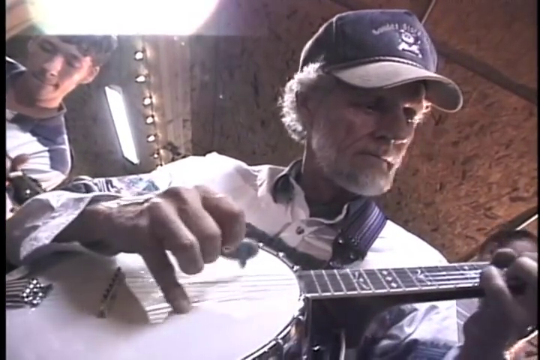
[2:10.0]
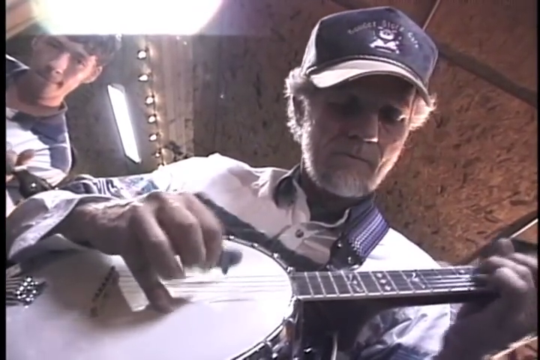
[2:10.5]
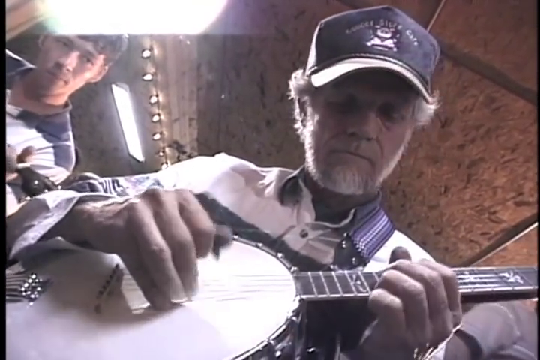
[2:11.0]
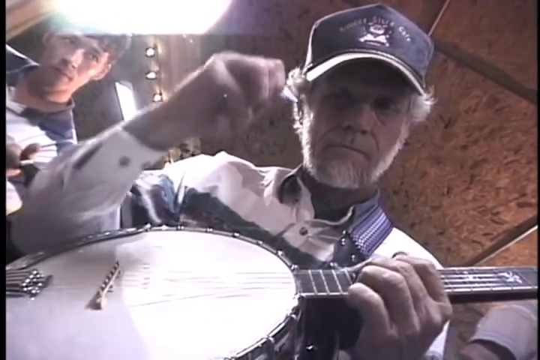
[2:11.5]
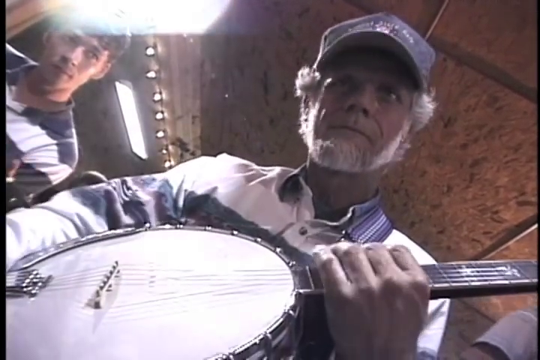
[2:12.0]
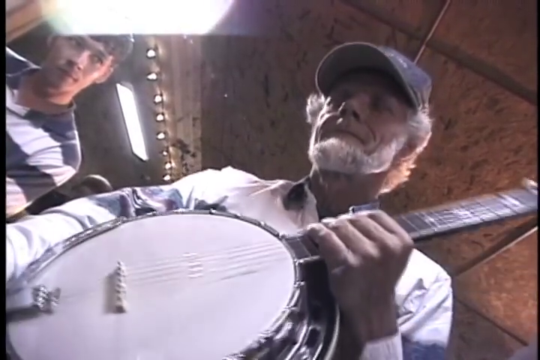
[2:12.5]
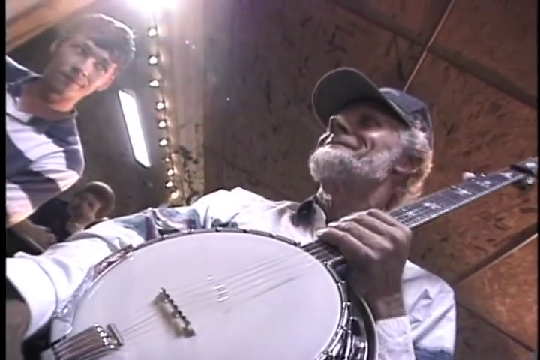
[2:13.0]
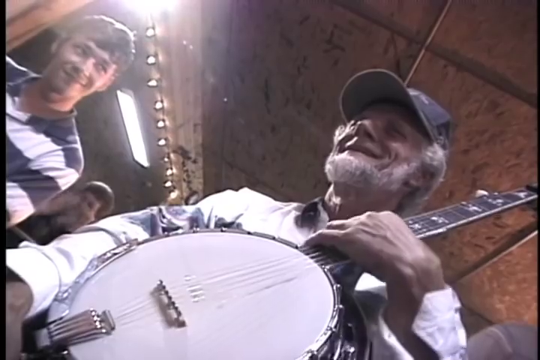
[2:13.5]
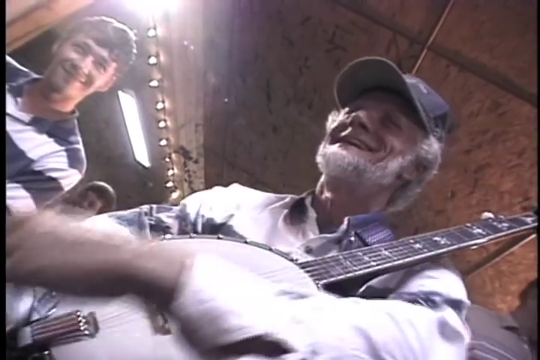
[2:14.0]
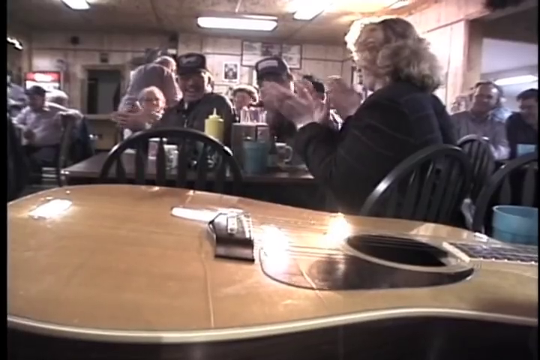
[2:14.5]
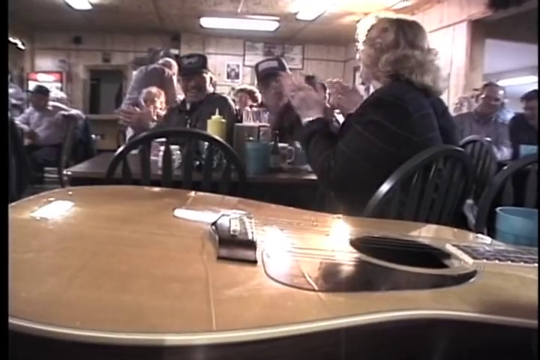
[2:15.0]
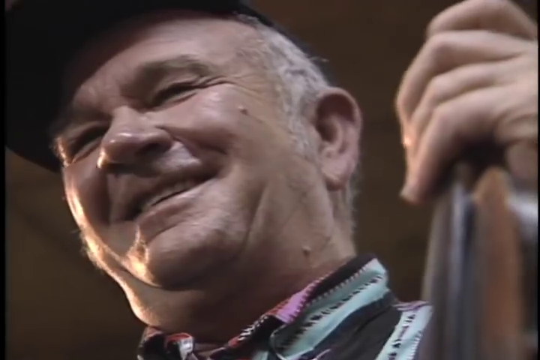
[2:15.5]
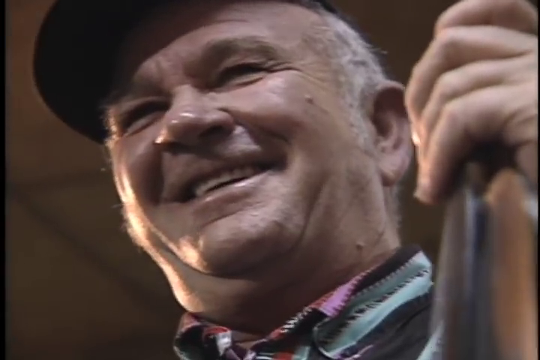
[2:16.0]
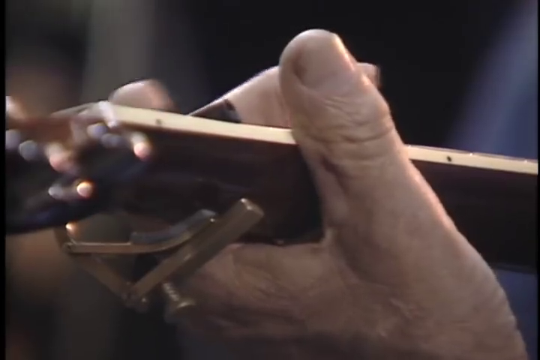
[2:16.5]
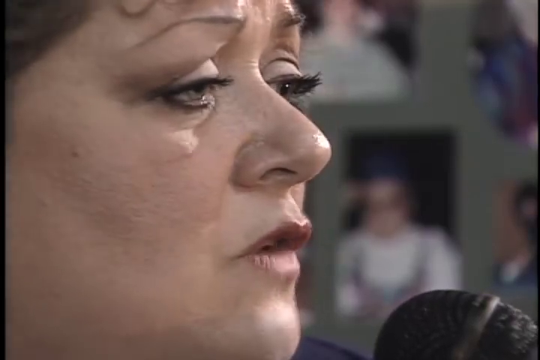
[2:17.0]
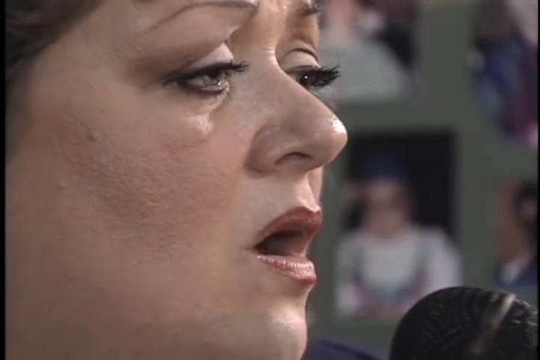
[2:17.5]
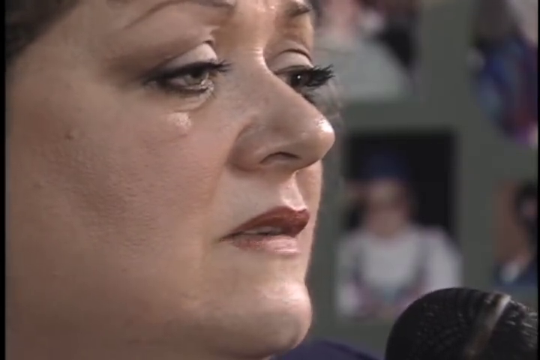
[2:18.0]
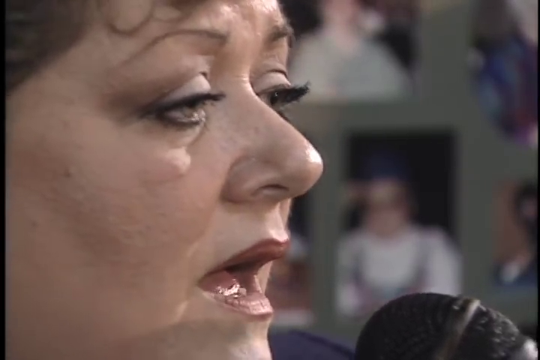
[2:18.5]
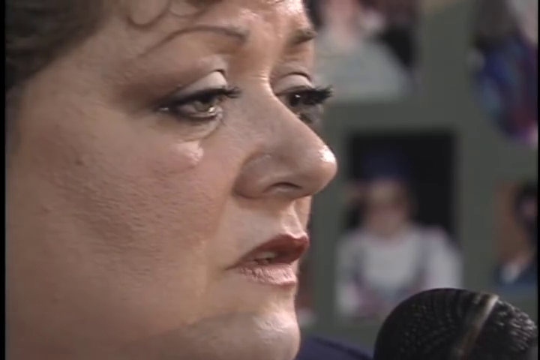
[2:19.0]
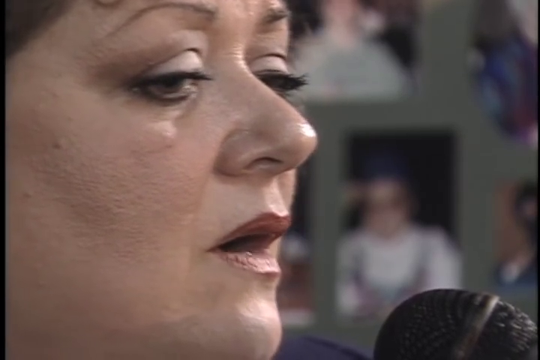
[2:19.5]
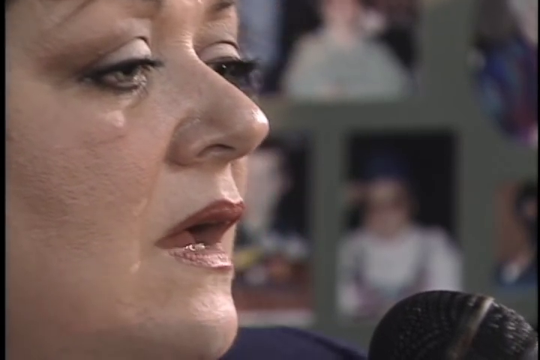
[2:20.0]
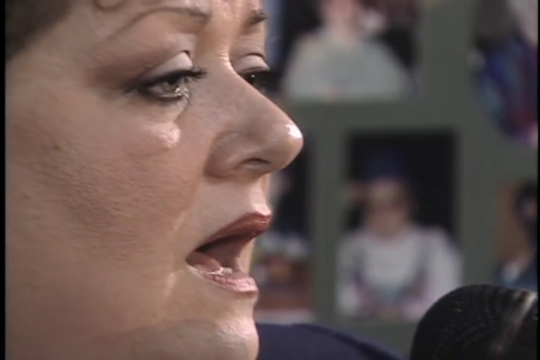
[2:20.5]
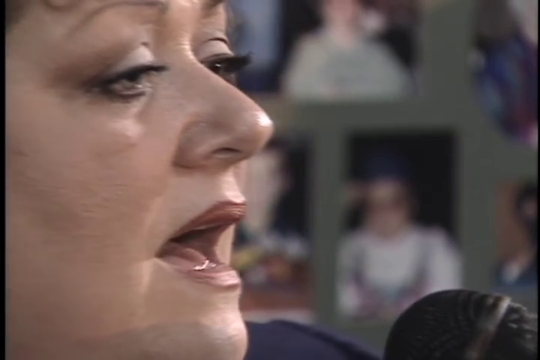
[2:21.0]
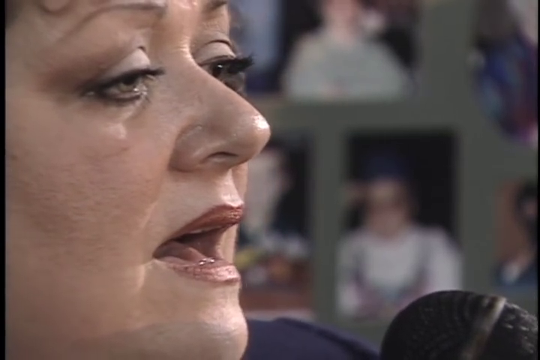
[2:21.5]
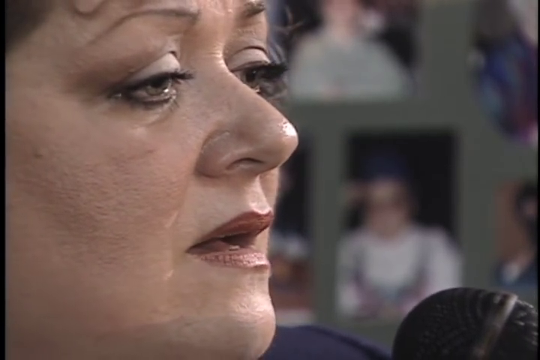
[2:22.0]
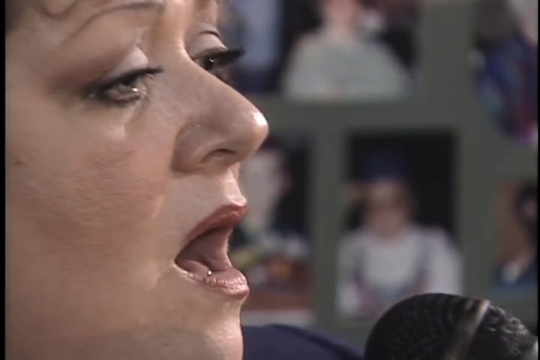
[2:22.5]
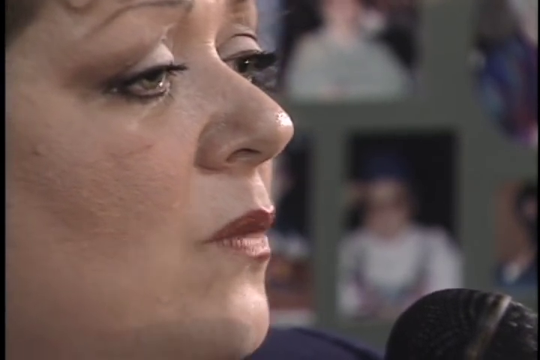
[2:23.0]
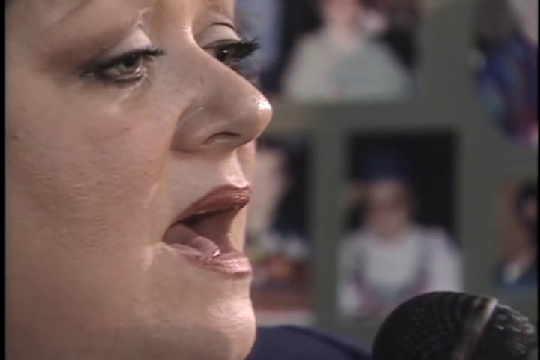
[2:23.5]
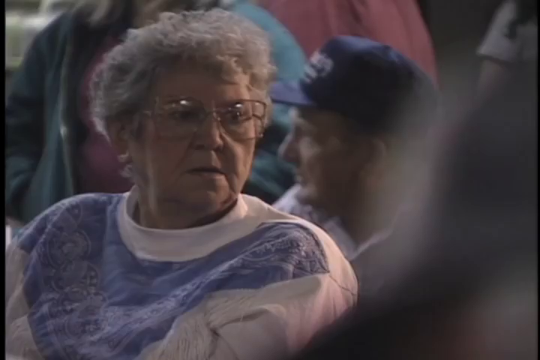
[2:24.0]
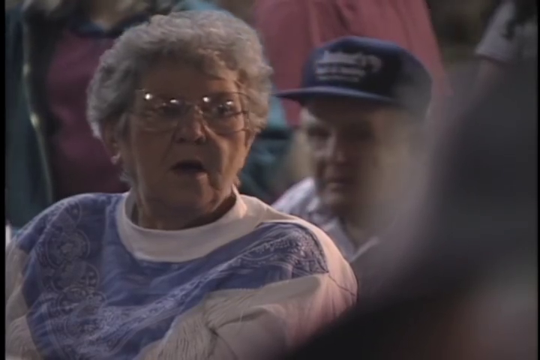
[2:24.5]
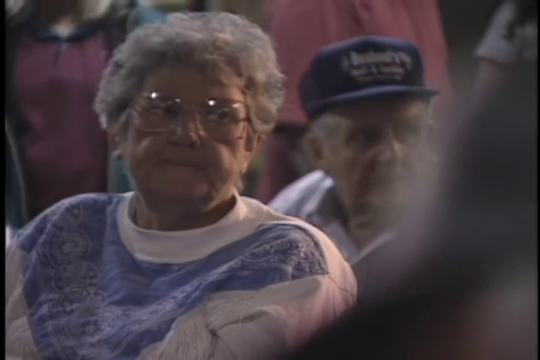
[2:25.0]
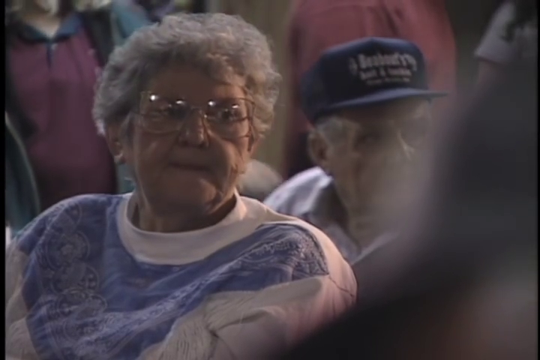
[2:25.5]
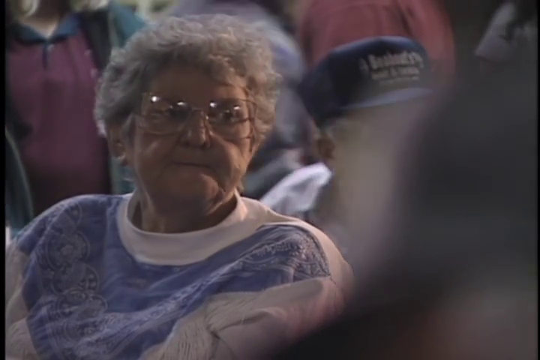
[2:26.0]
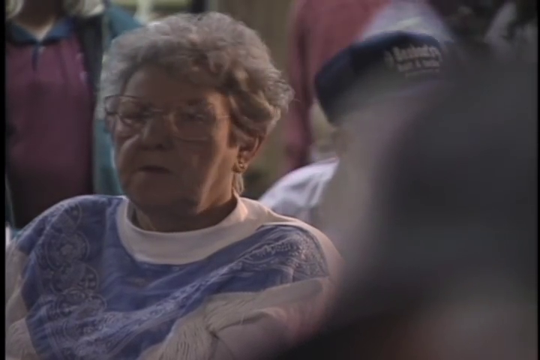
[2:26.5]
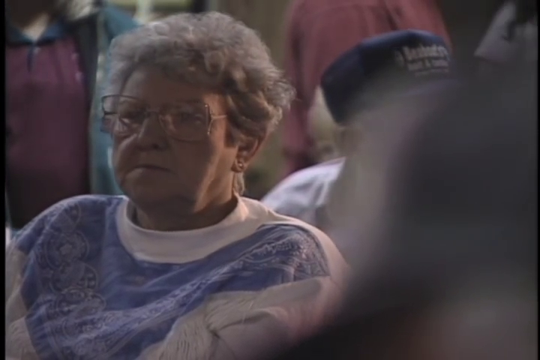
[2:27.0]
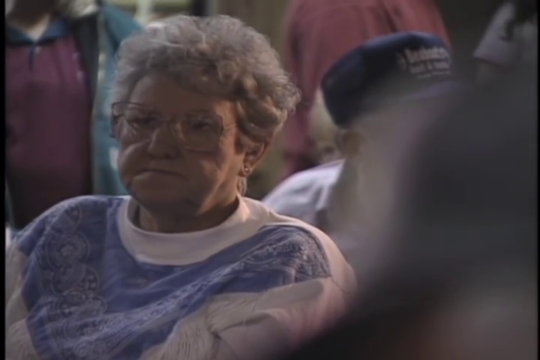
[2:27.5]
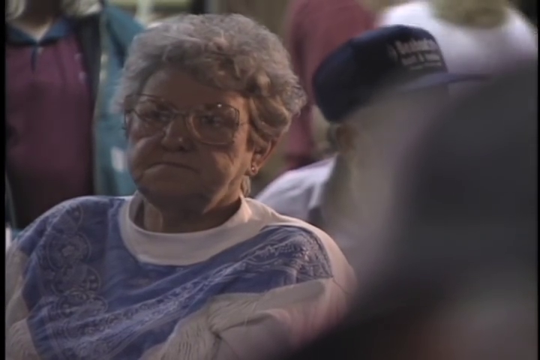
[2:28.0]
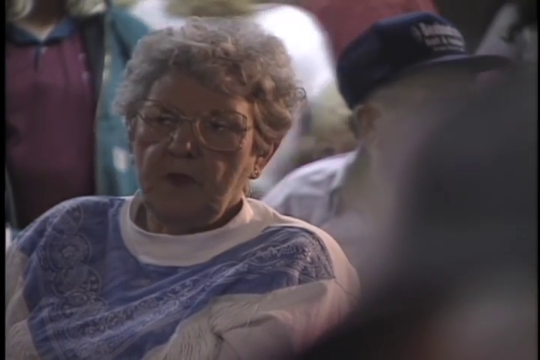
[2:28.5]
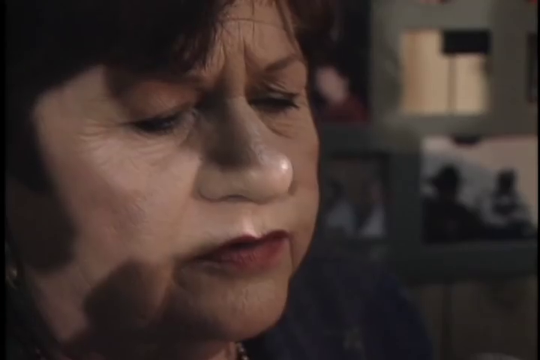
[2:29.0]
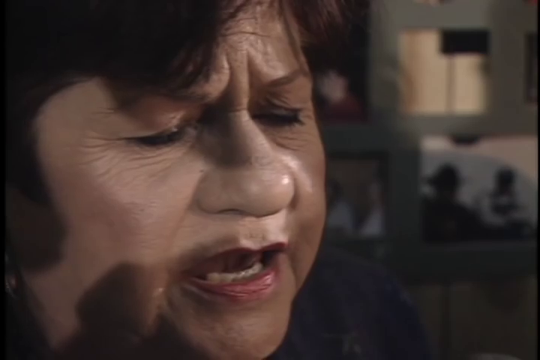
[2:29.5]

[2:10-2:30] Just to the right of center, one of the older men plays his banjo and stops as if the song has ended, holding the bottom of the banjo's neck with his left hand and raising it slightly on a diagonal over his shoulder. He smiles to his right, and on the left of the frame a younger man smiles over at him. Next, a guitar is laid flat on a surface, with the bridge, sound hole, pick guard, strings and the beginning of the neck visible. Past it, in the foreground, people at tables applaud. The shot moves to another man smiling, and to a woman side-on to the camera, now clearly singing into a microphone. Audience members nod appreciatively.